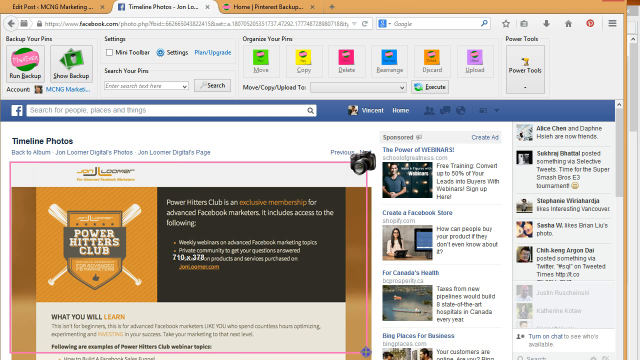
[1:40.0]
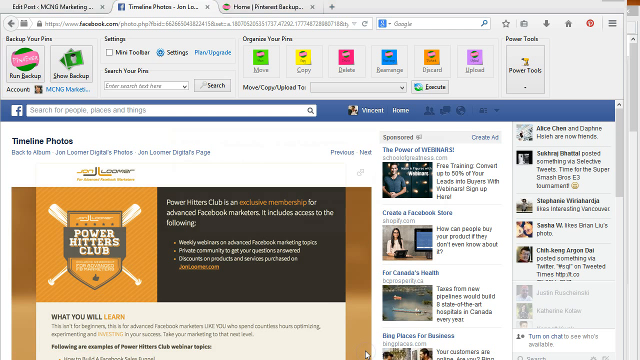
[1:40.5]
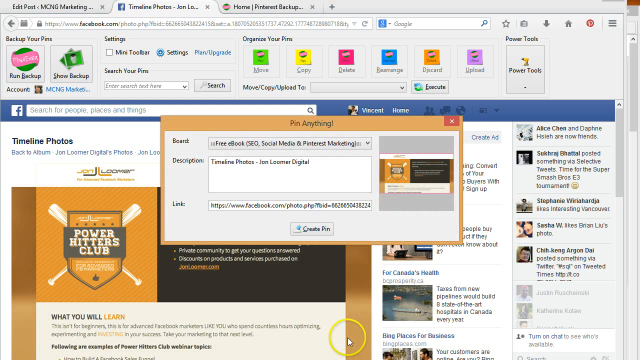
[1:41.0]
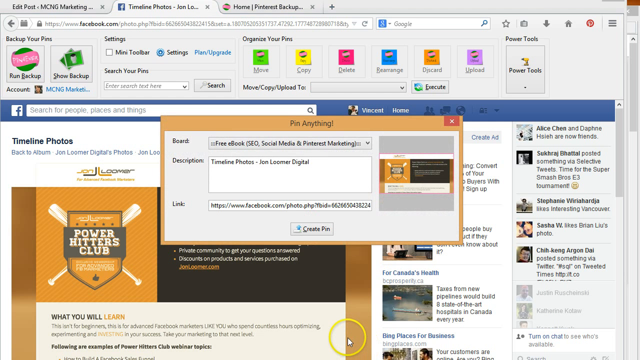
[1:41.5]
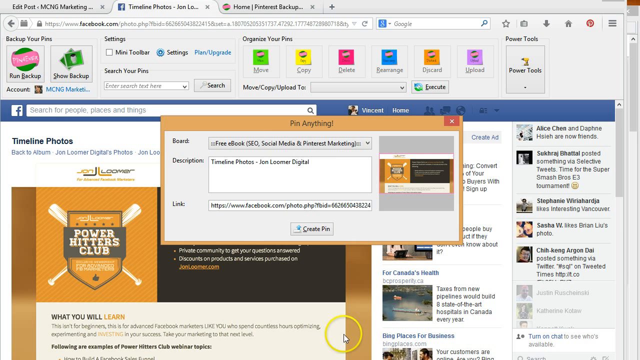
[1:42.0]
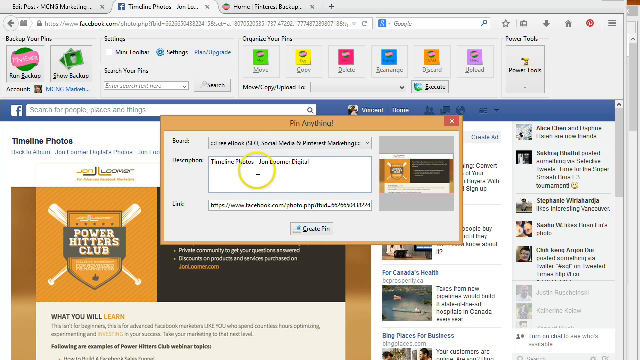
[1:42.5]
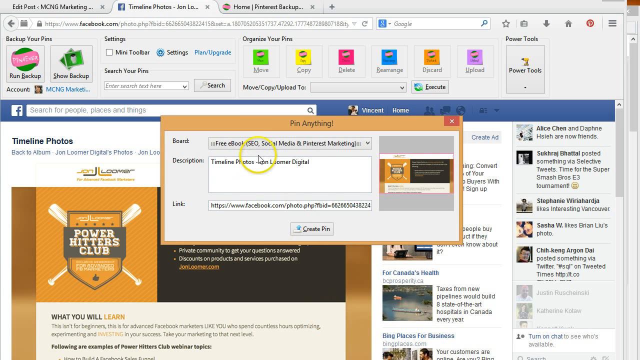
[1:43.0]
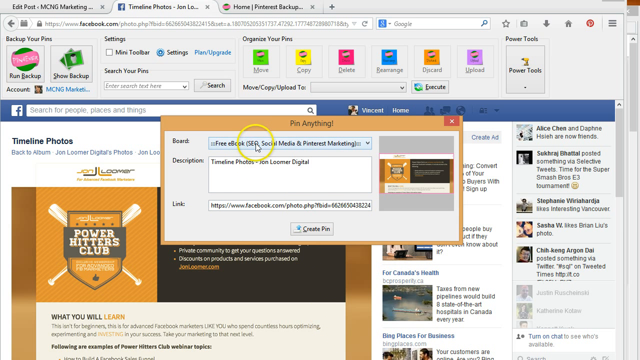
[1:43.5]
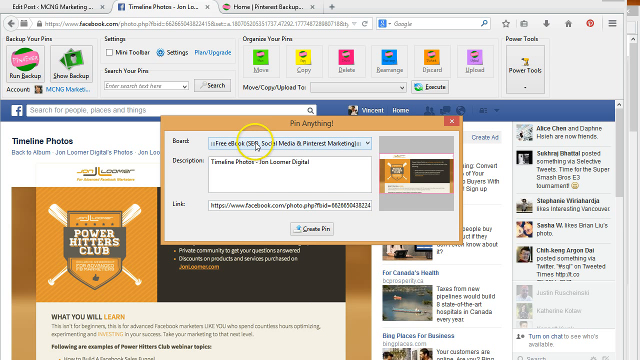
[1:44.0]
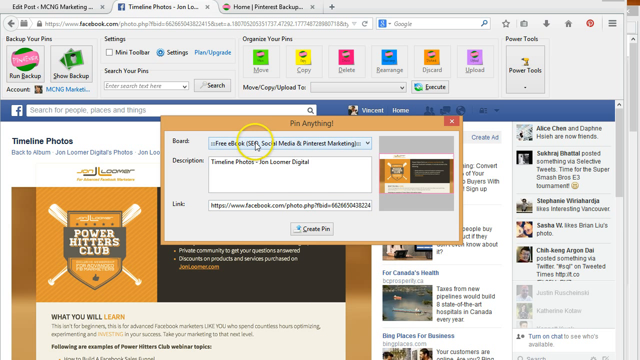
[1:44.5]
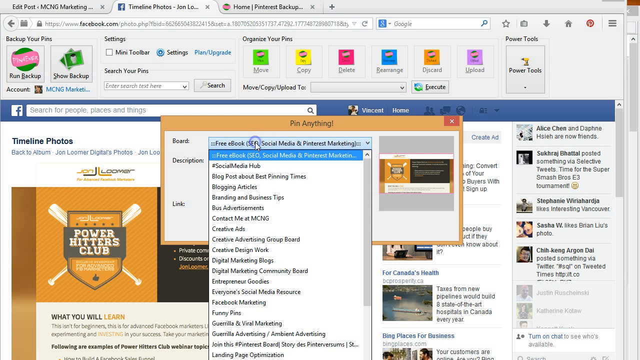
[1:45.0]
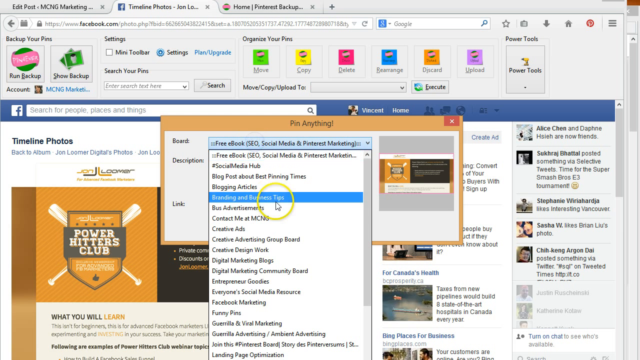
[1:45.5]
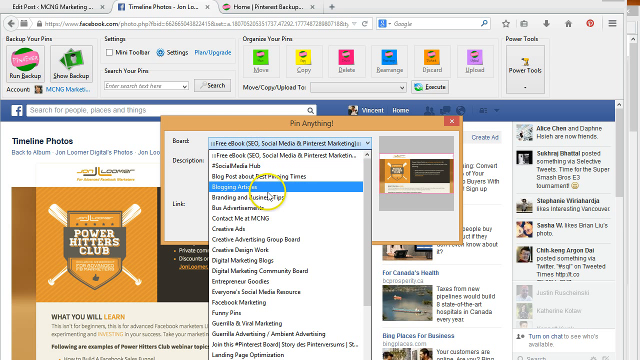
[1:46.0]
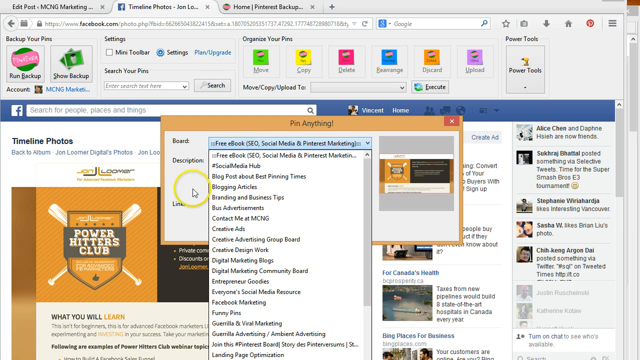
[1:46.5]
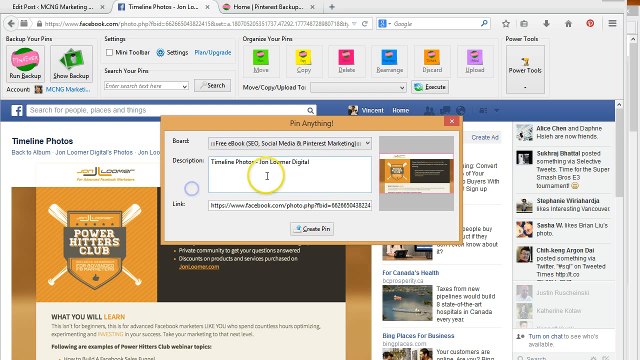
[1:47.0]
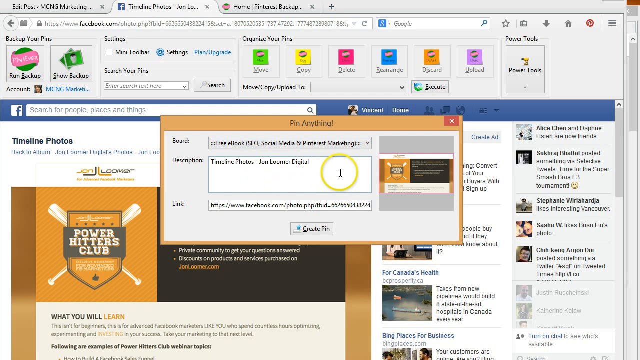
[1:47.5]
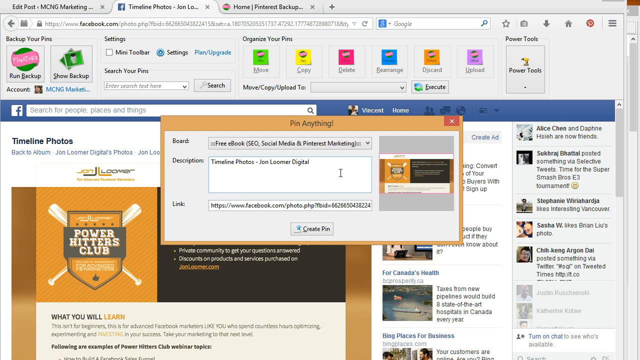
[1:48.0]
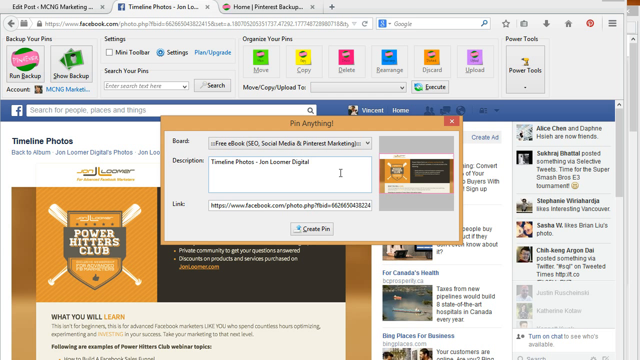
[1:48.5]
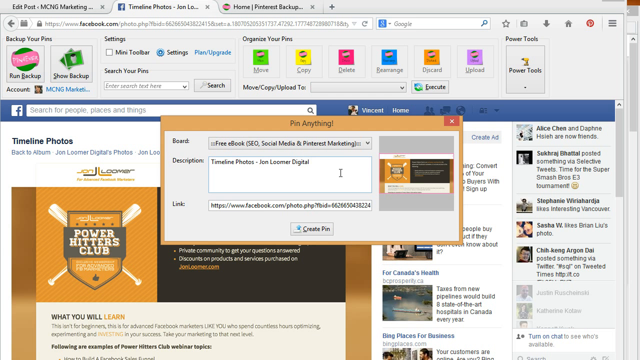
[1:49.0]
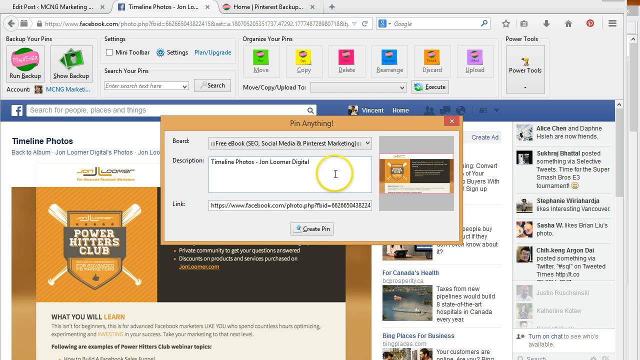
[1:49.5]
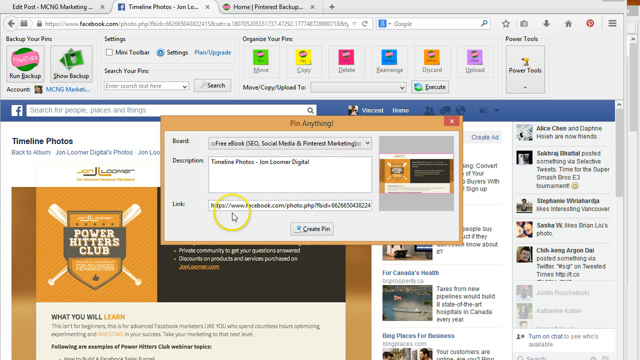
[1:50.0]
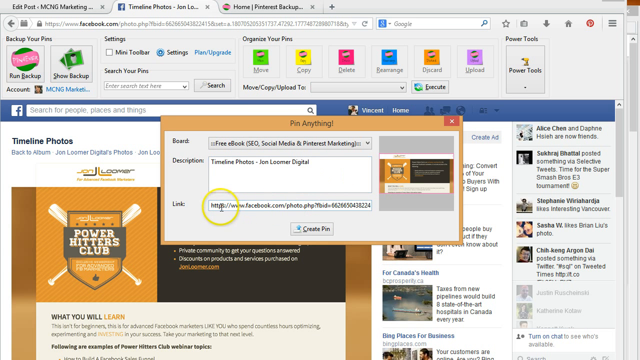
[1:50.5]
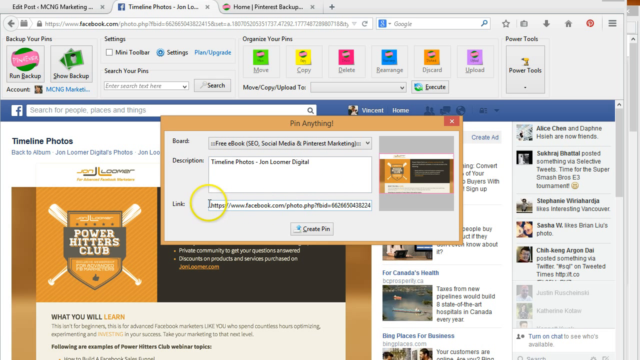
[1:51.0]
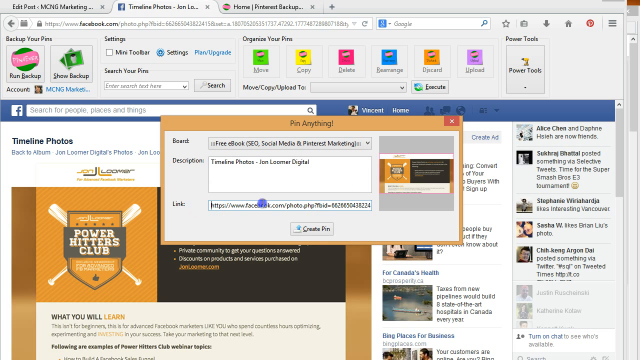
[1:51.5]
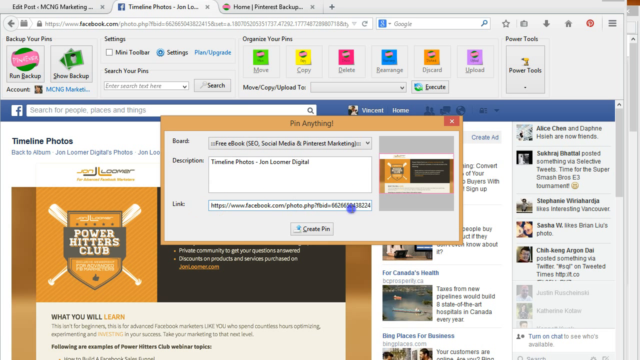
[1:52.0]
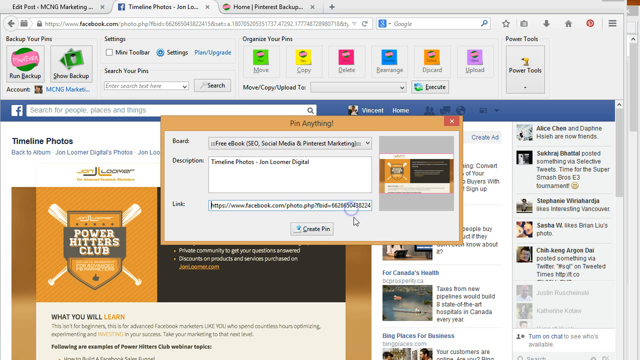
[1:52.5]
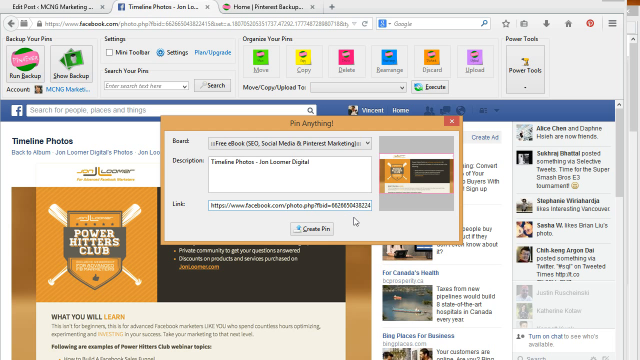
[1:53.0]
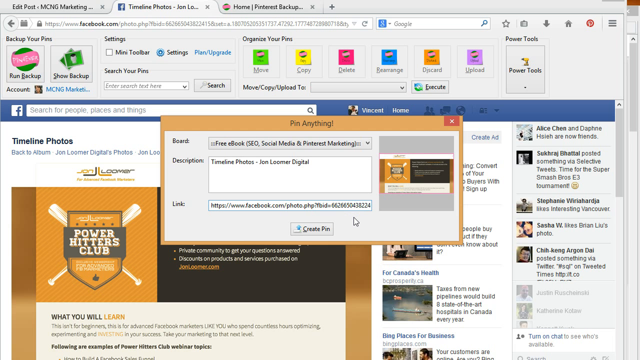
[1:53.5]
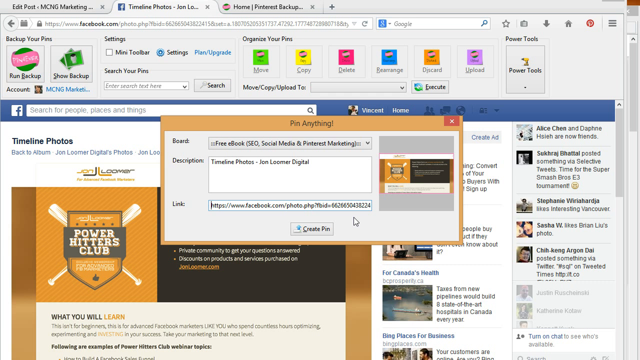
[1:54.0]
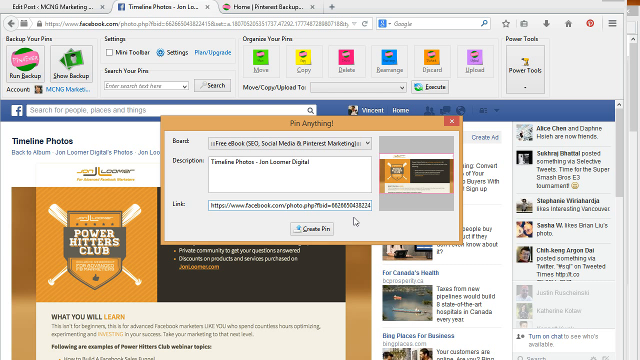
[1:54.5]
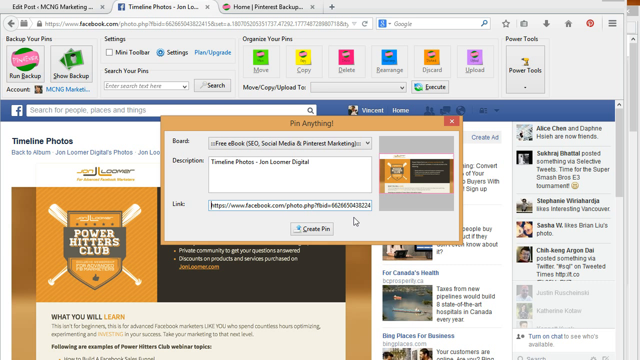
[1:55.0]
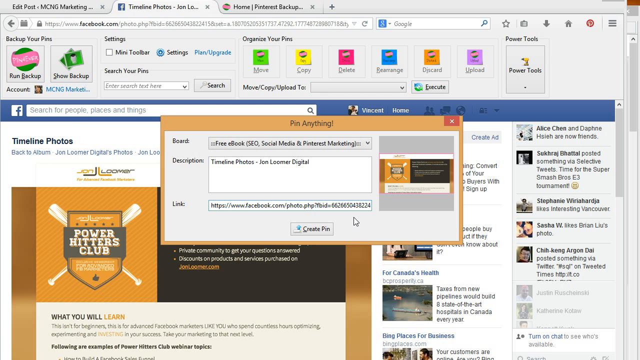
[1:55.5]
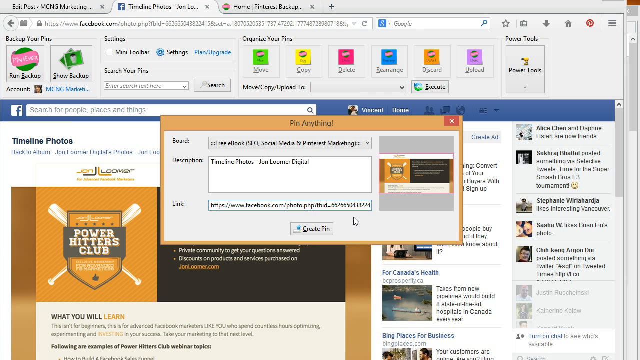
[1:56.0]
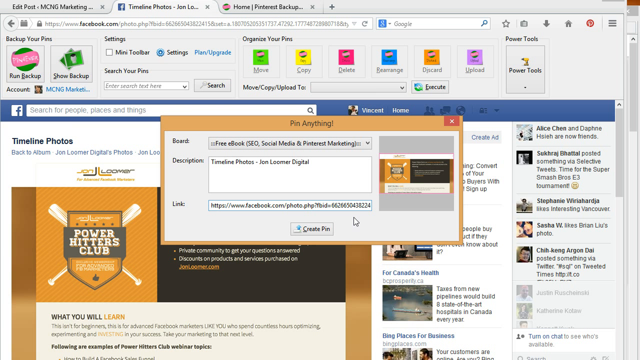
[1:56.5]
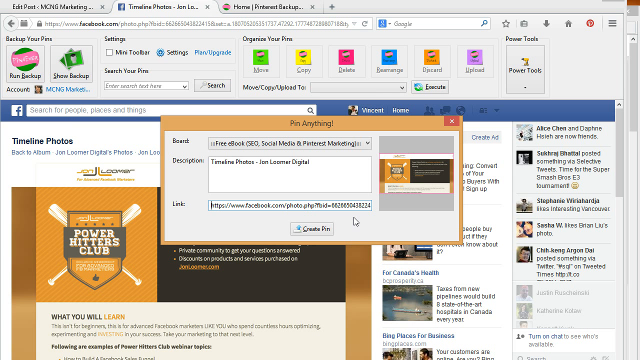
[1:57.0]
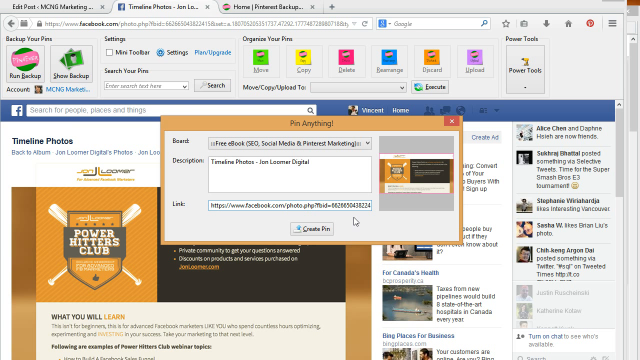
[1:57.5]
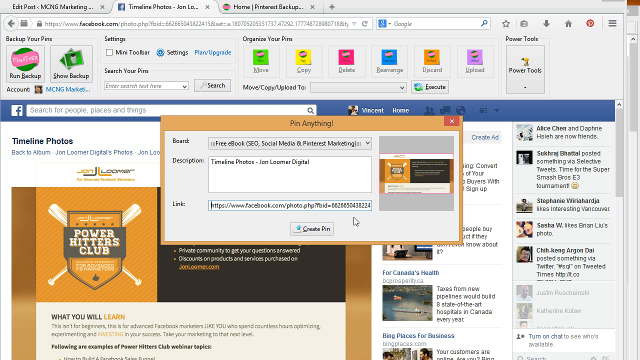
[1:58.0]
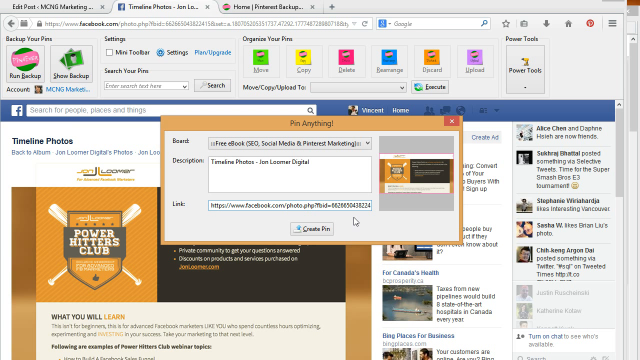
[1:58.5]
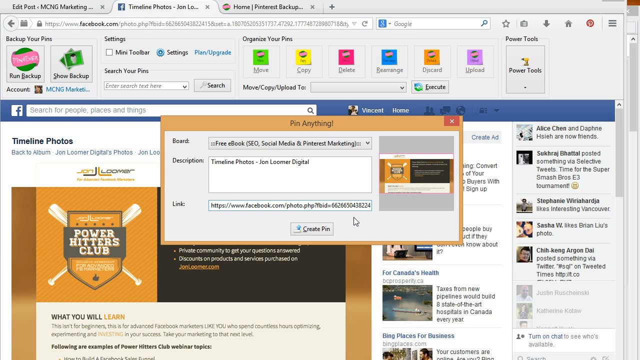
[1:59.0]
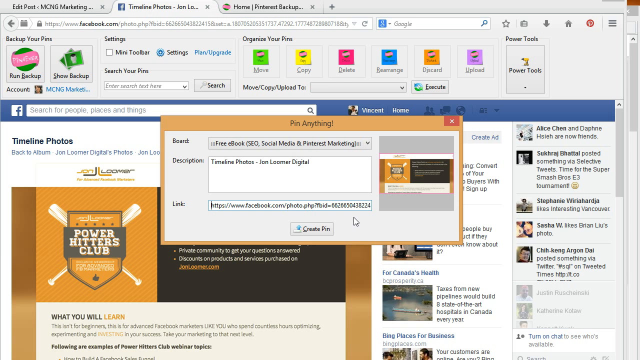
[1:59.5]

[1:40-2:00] A very busy page has pop-ups appearing in the middle of the screen. A pop-up reads "pin anything", with a typed description reading "timeline photos, John Loomer Digital", and then it disappears. Timeline photos, specifically Power Hitters Club, is outlined with a red box. The pop-up appears again as the cursor moves around; a link is clicked, and "create pin" is at the bottom of the pop-up. The pop-up disappears, showing the Power Hitters Club page with random articles and sponsored ads on the right-hand side, each with a picture on its side. At the top of the screen are various settings and options to organize pins.